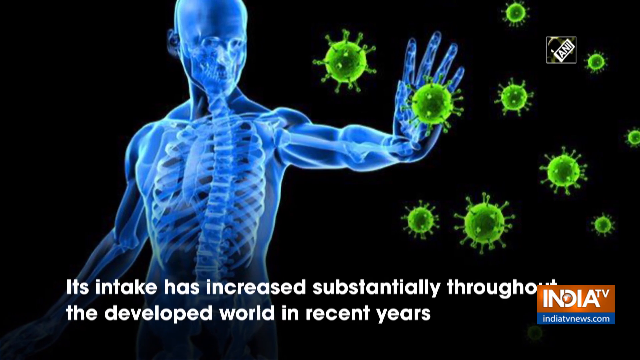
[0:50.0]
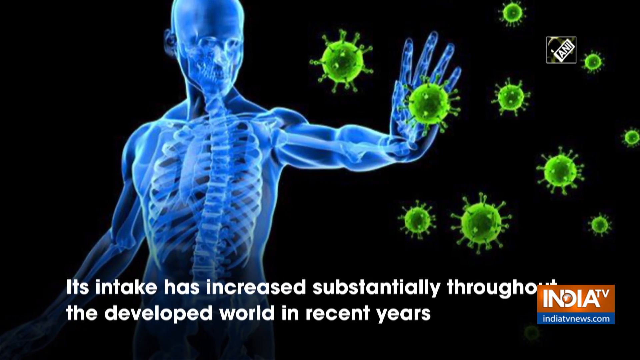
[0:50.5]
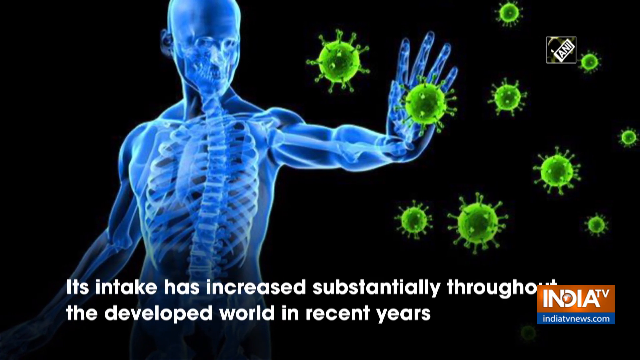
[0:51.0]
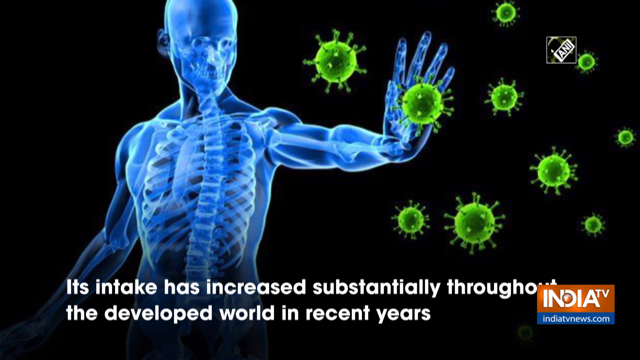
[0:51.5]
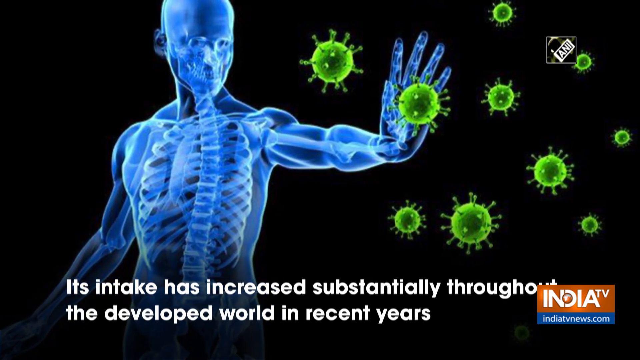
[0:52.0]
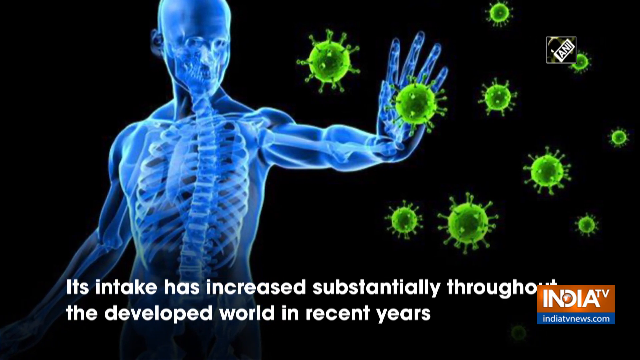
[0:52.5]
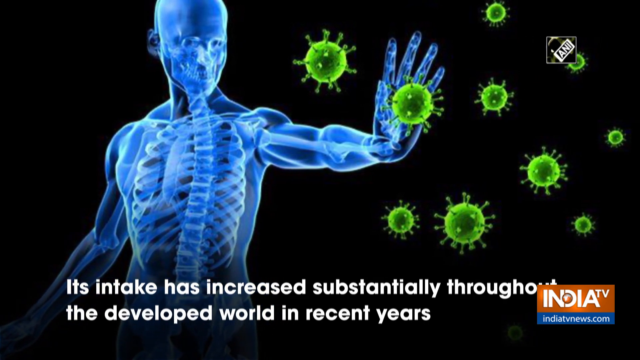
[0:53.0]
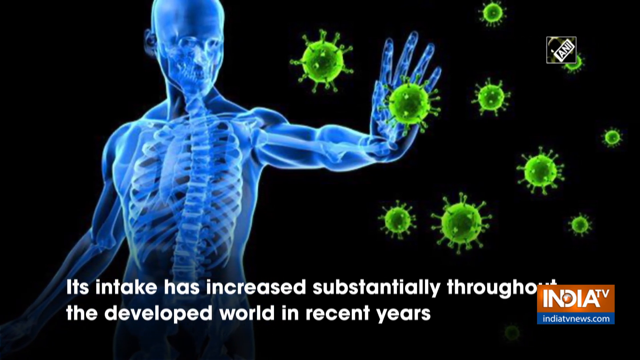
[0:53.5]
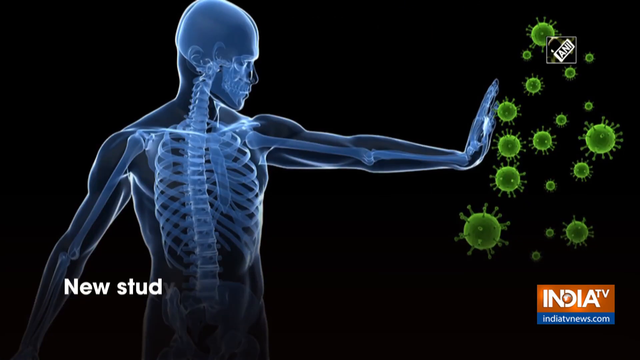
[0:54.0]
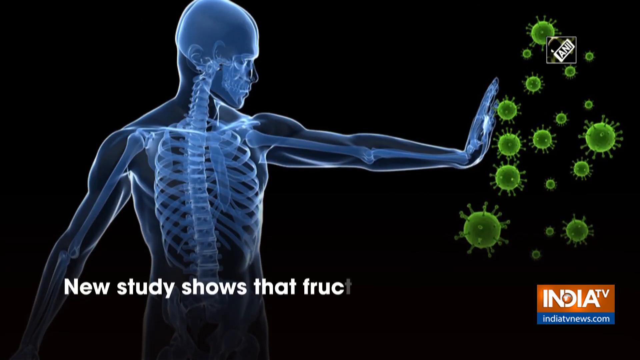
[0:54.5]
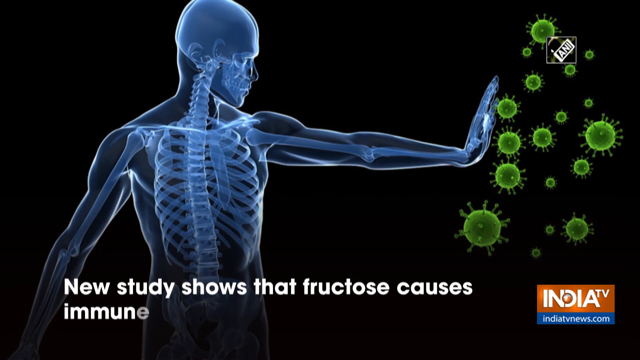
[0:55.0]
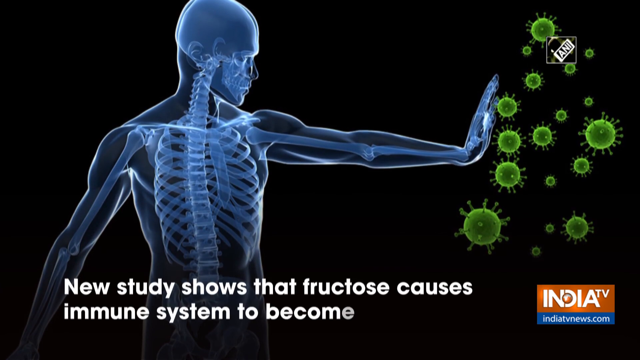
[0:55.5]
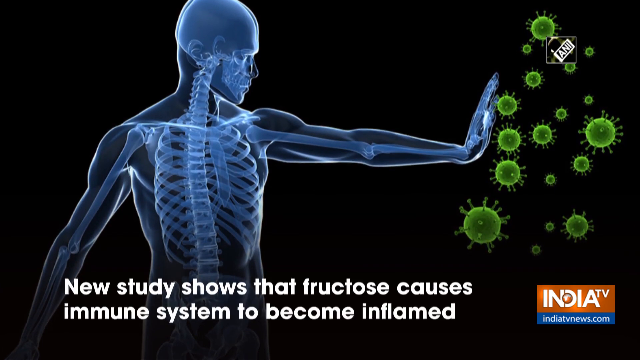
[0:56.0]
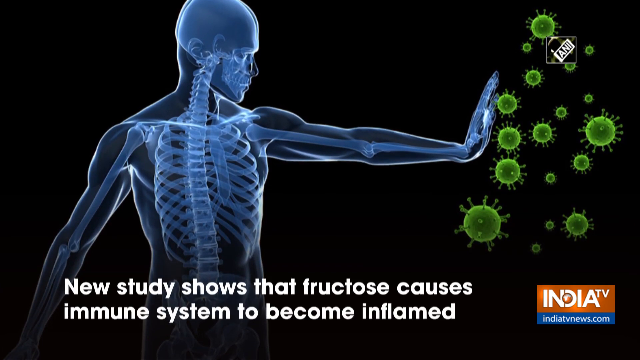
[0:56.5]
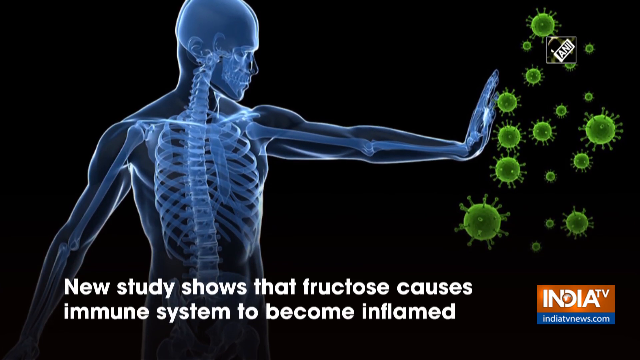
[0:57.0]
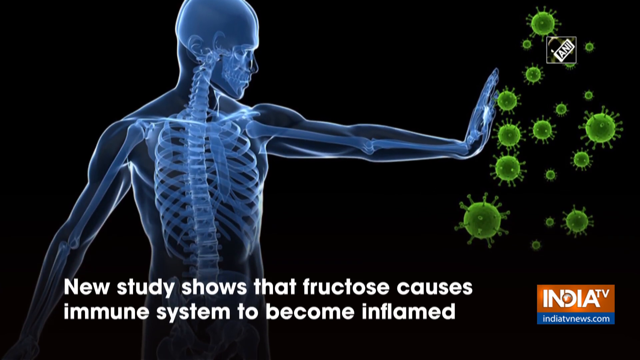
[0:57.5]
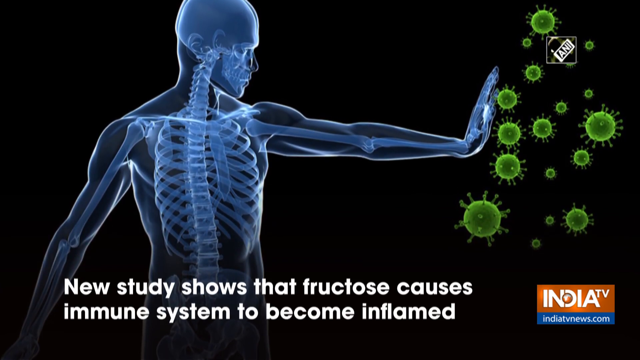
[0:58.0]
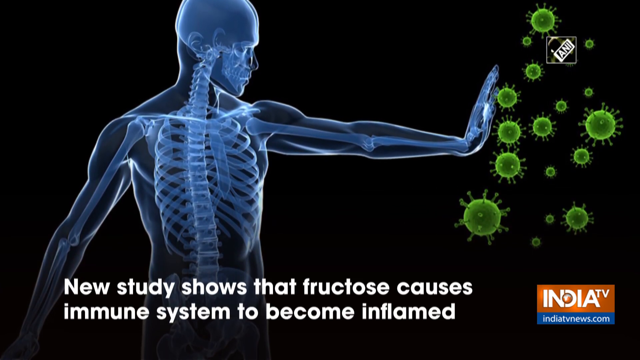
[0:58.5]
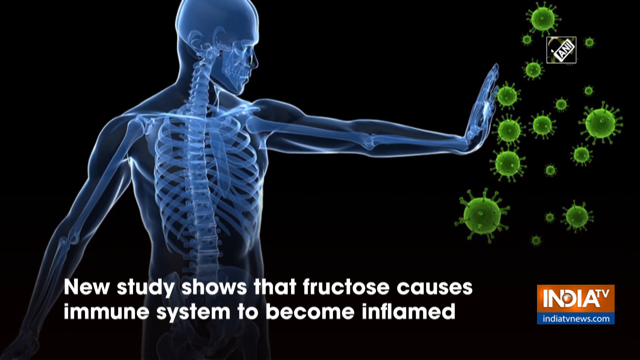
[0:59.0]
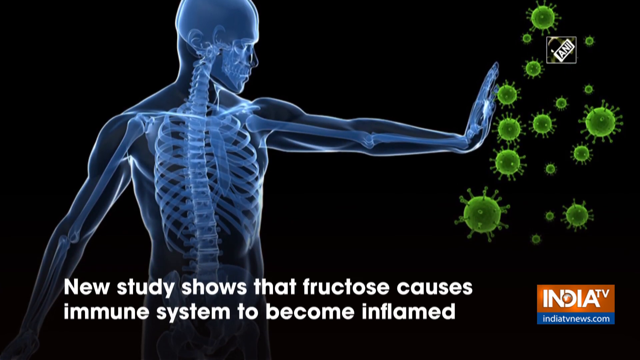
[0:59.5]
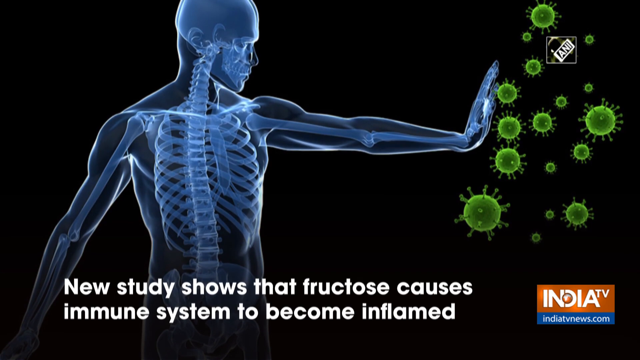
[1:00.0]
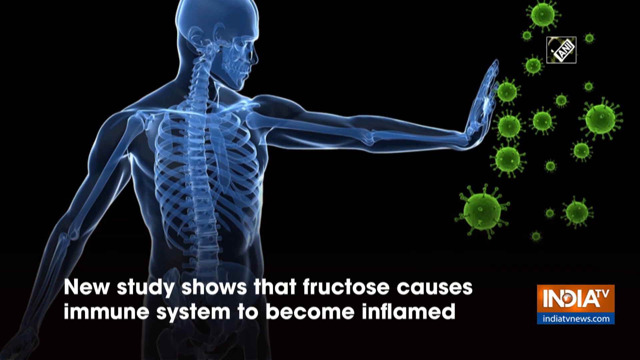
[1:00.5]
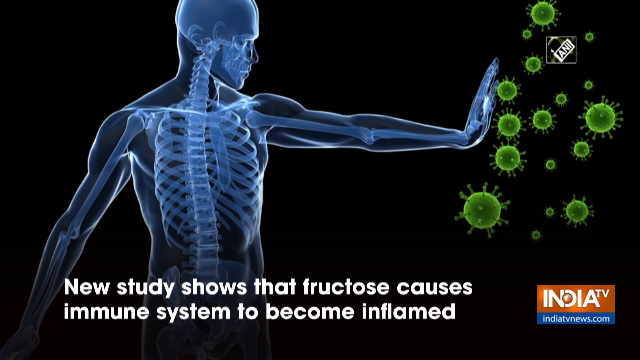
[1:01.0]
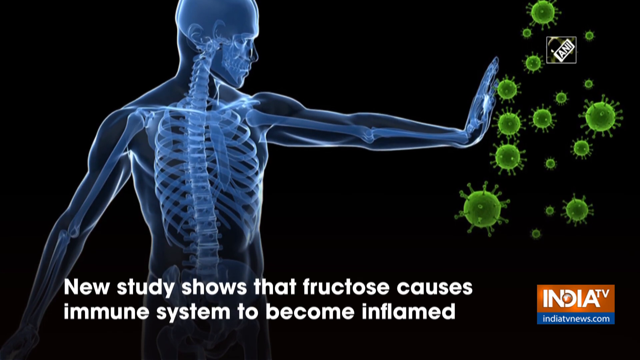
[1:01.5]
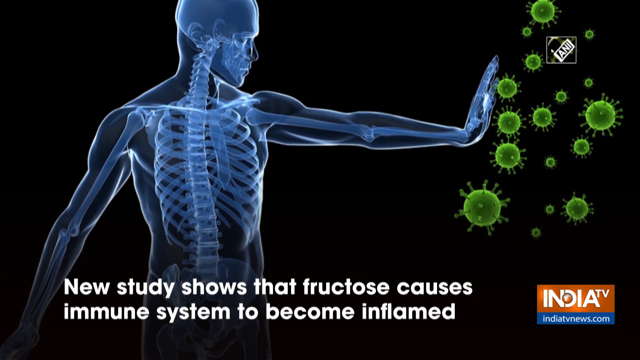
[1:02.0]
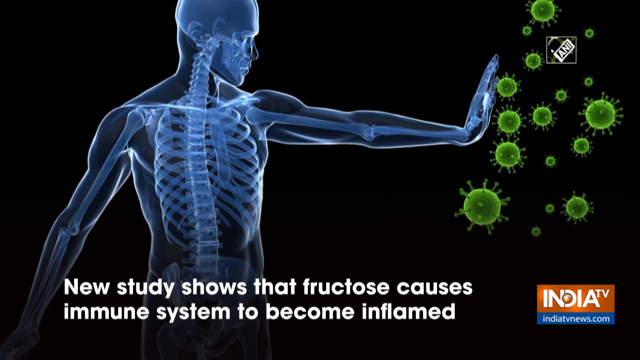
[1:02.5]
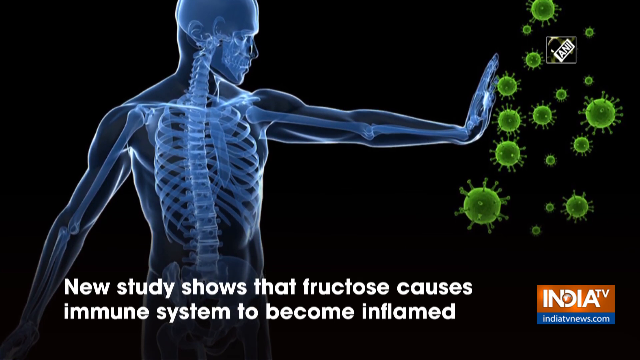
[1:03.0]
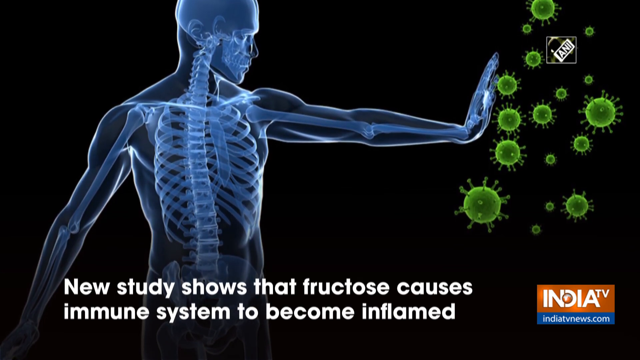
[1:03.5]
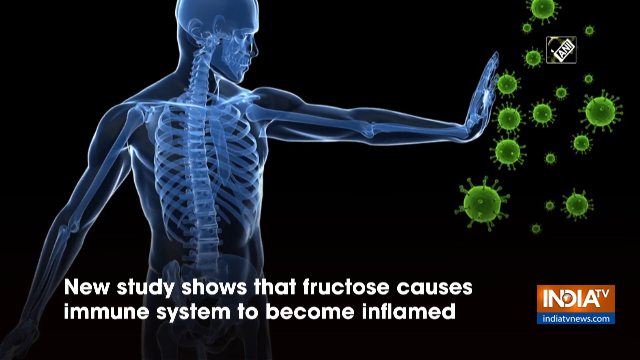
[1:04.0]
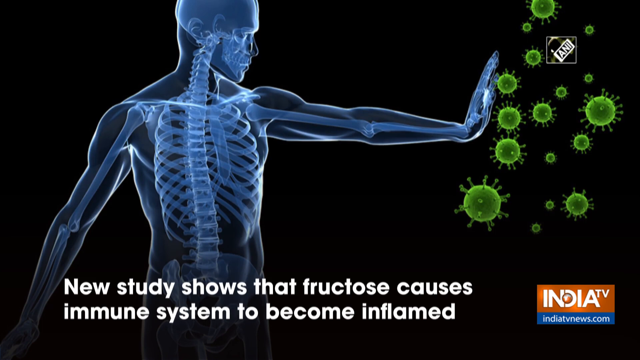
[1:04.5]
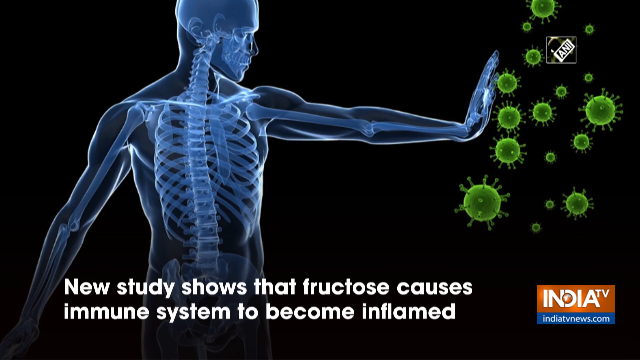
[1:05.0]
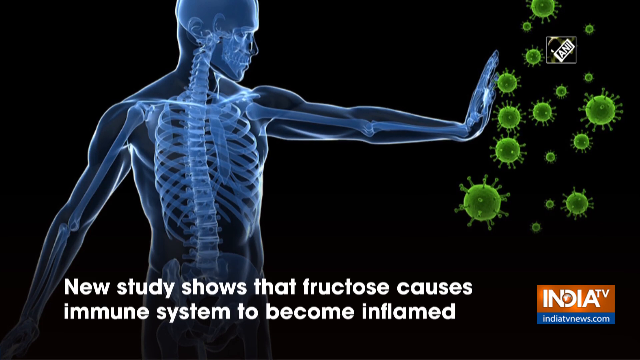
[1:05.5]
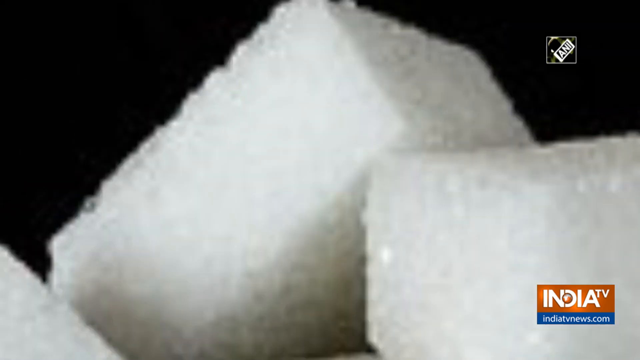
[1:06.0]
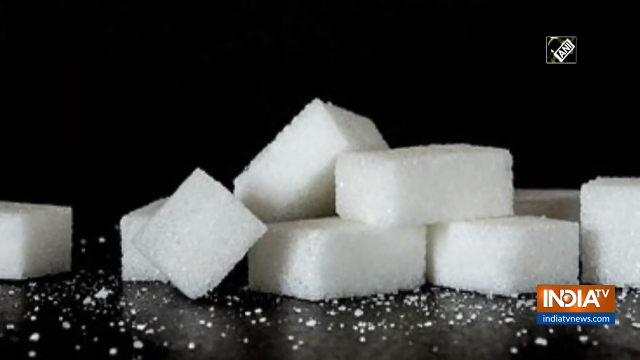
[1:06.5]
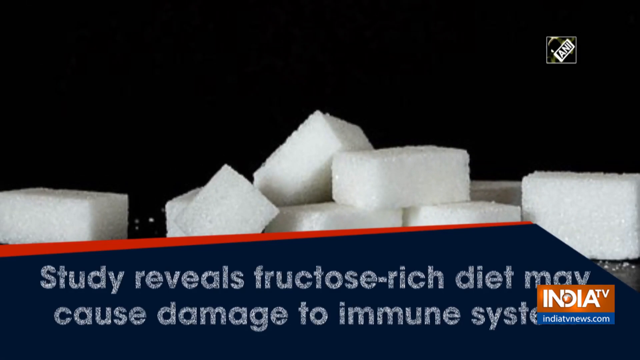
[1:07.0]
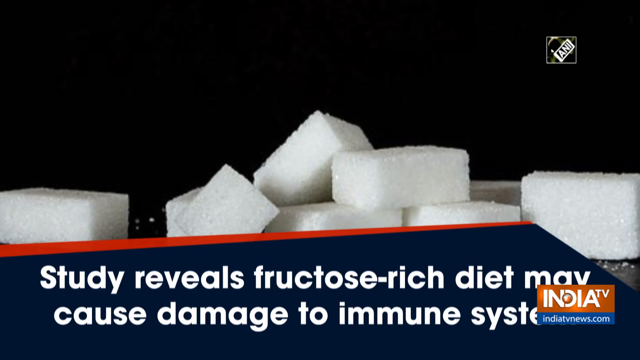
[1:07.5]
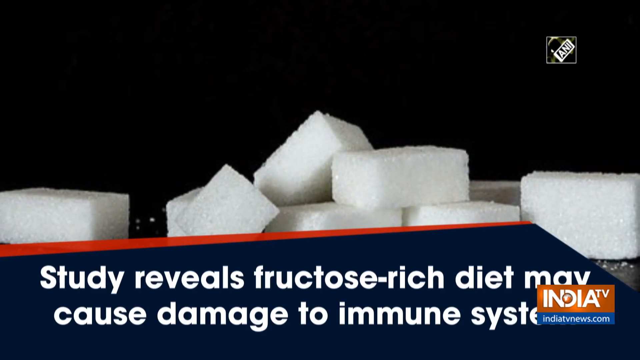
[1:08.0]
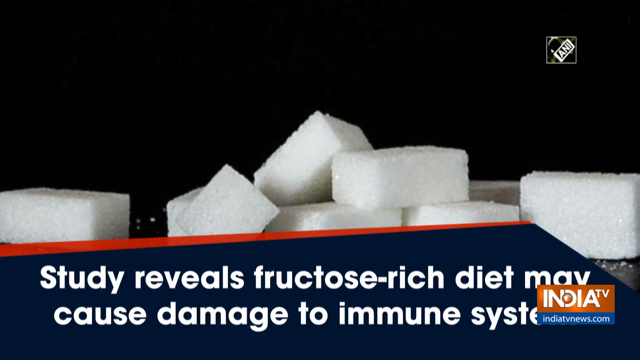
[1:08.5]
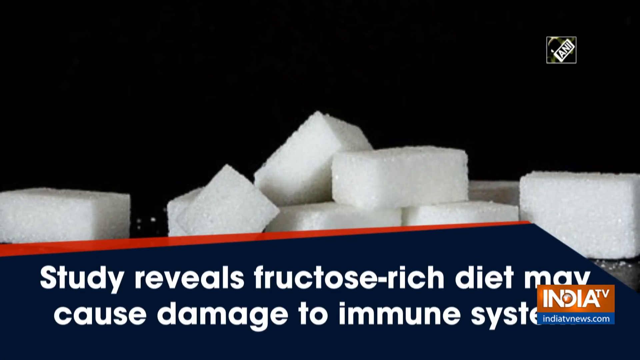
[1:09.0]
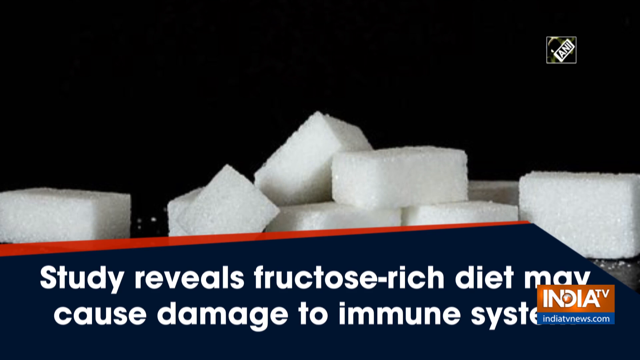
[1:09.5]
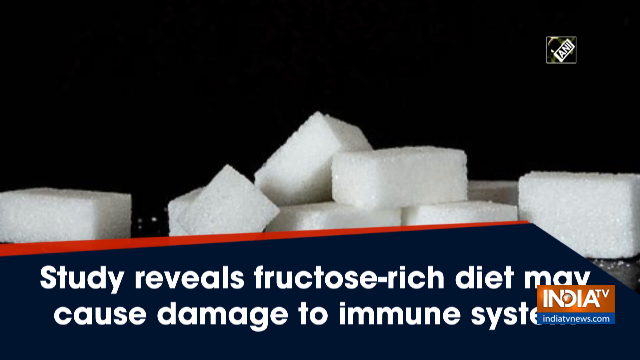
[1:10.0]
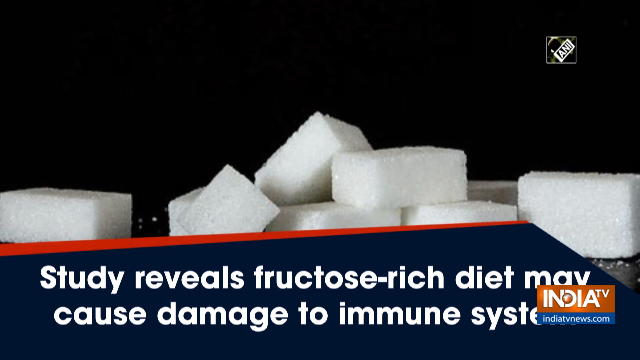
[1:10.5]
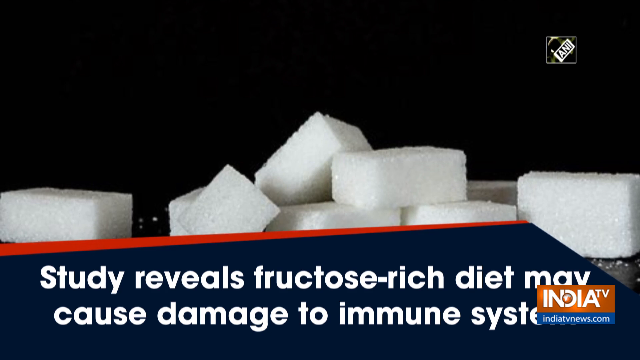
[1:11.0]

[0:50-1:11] A plain black screen shows an illuminated humanoid-type figure in the center, its skeleton visible and lit up in blue. The figure has his left arm stretched out and appears to be blocking very large microbe-like figures illuminated in green. The TV channel's logo in the lower right-hand corner reads "India TV" against a red backdrop. Words at the bottom of the screen, written in white letters, read "new study shows that fructose causes immune system to become inflamed." After several seconds, the camera cuts away to a close-up shot of sugar cubes laying on a black table with a black background, and the words at the bottom of the screen read "study reveals fructose-rich diet may cause damage to immune system."